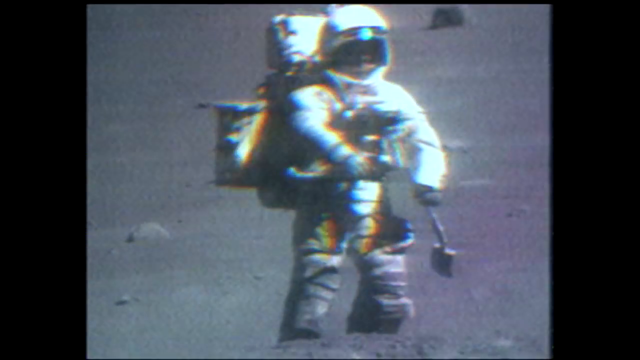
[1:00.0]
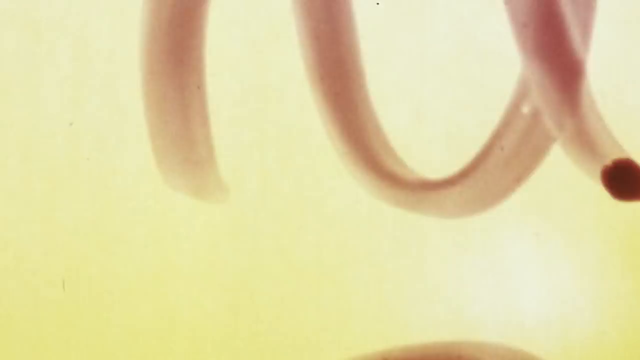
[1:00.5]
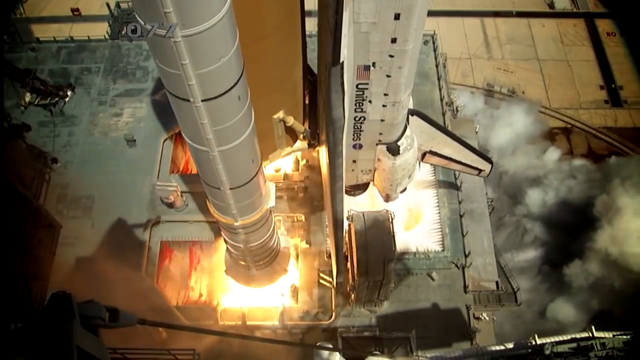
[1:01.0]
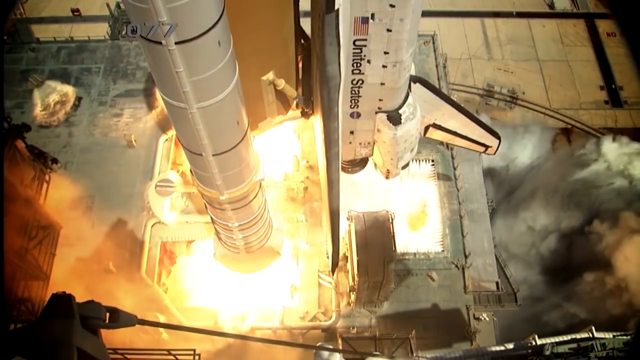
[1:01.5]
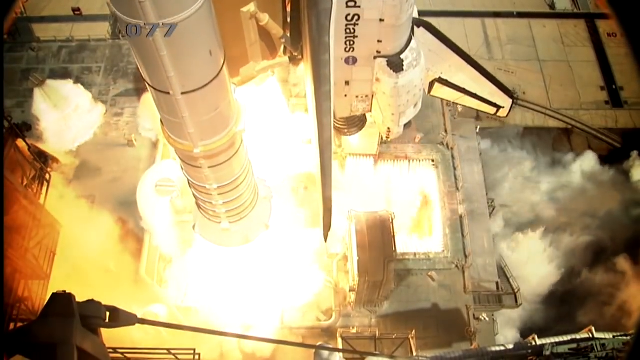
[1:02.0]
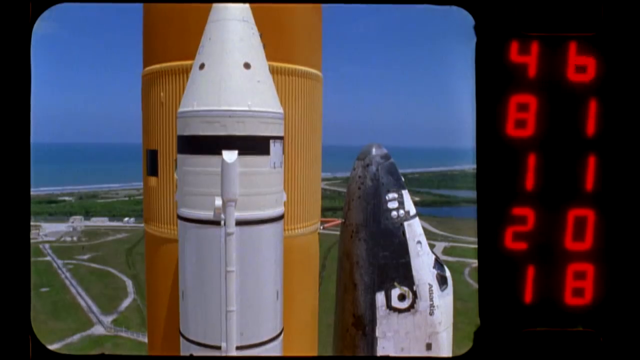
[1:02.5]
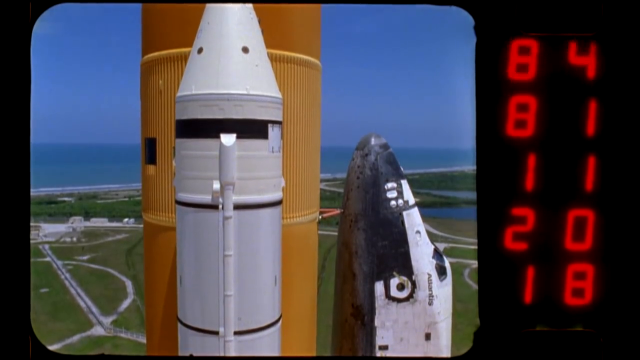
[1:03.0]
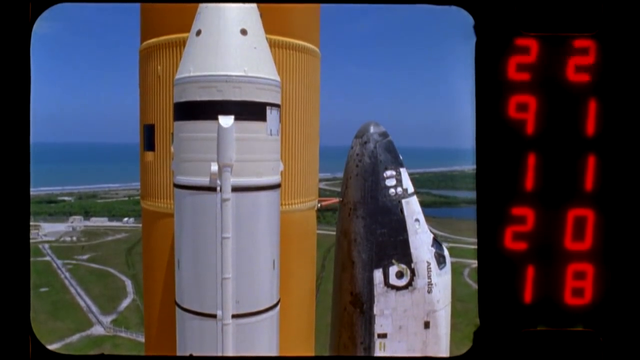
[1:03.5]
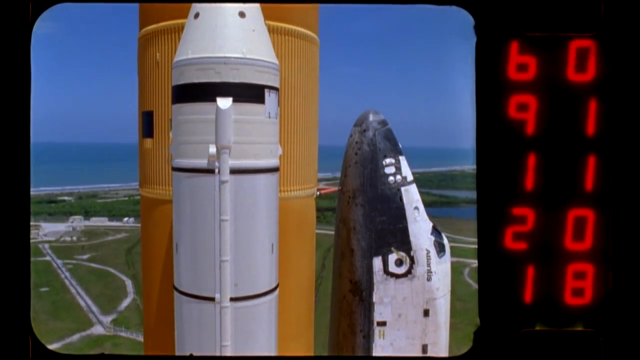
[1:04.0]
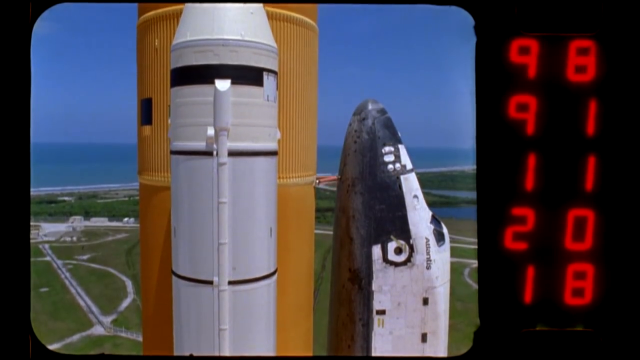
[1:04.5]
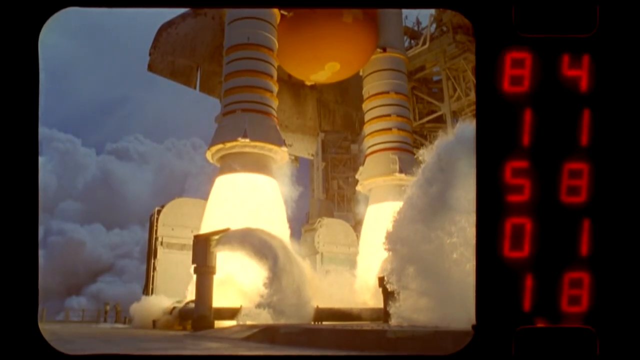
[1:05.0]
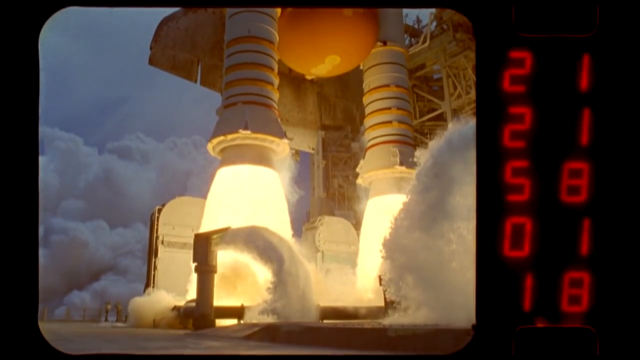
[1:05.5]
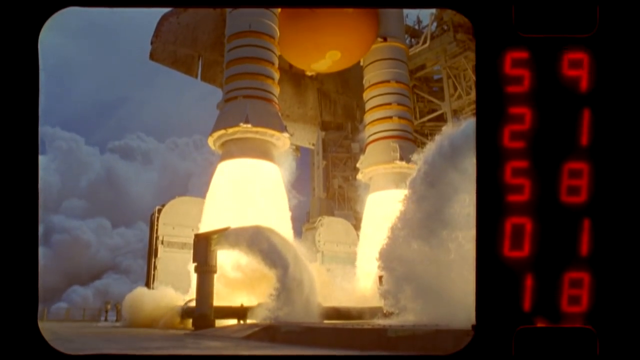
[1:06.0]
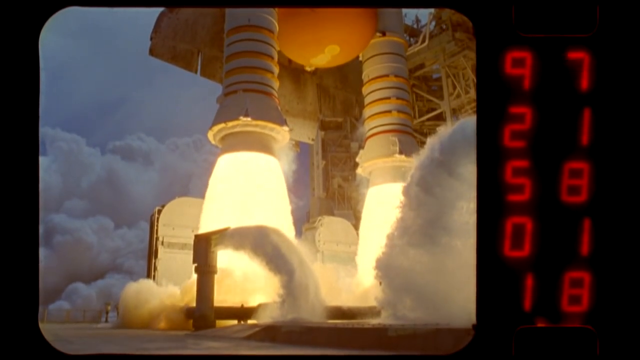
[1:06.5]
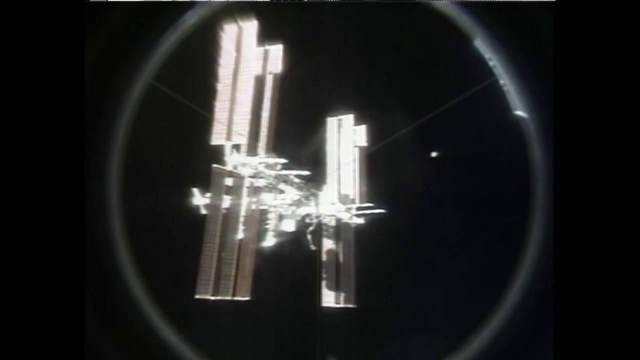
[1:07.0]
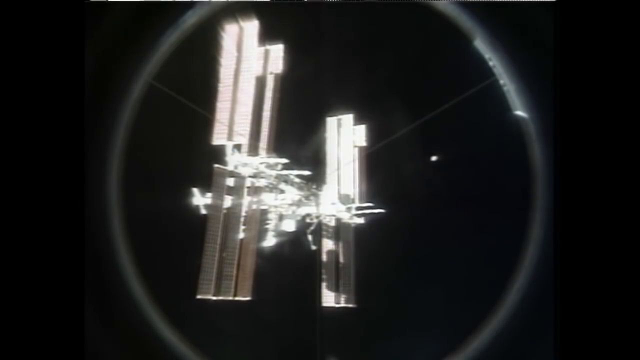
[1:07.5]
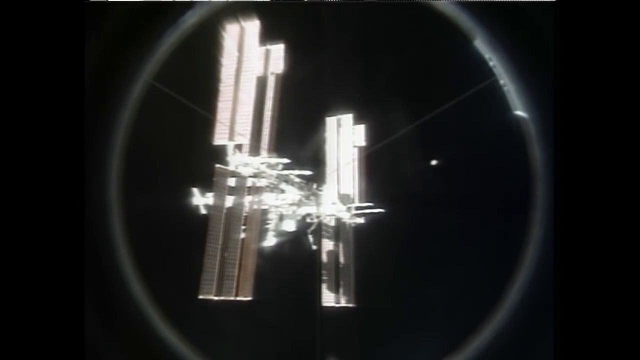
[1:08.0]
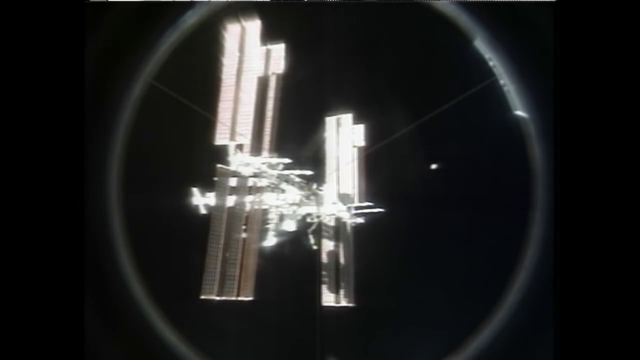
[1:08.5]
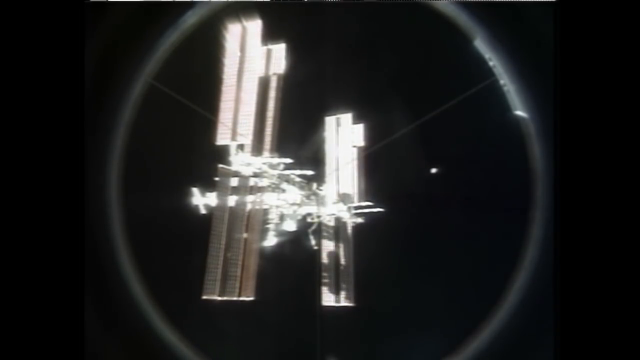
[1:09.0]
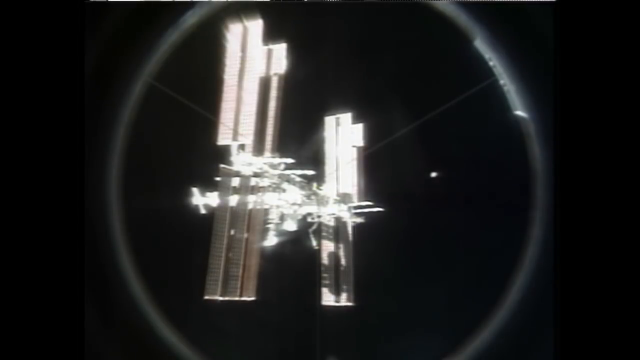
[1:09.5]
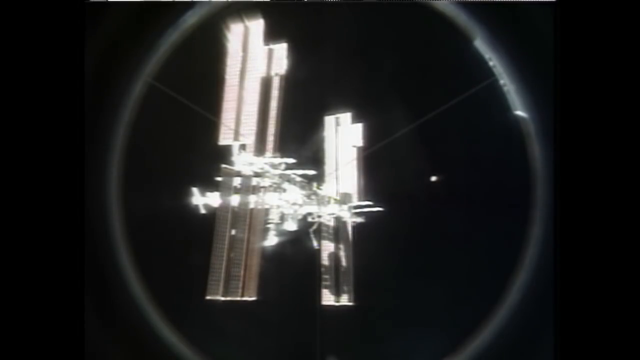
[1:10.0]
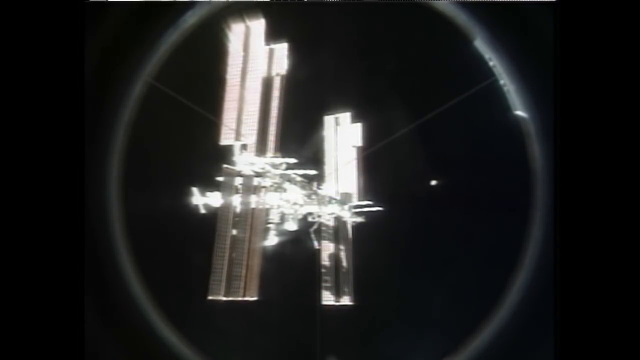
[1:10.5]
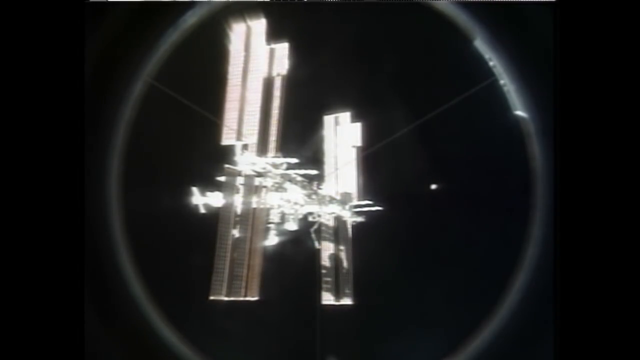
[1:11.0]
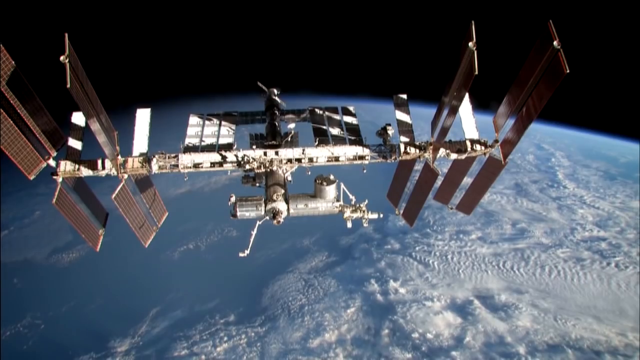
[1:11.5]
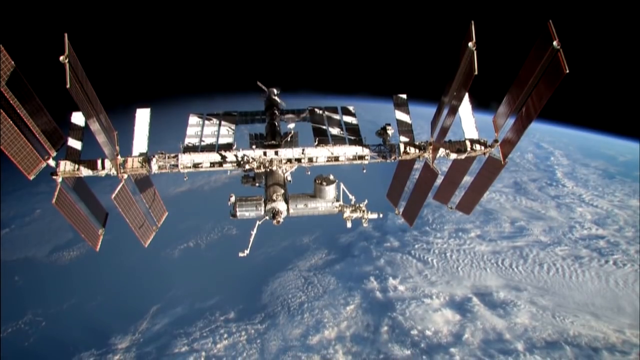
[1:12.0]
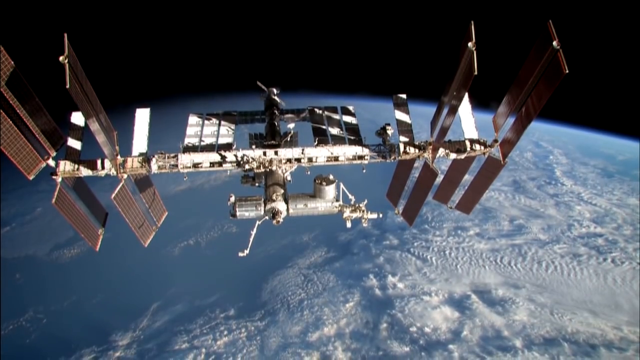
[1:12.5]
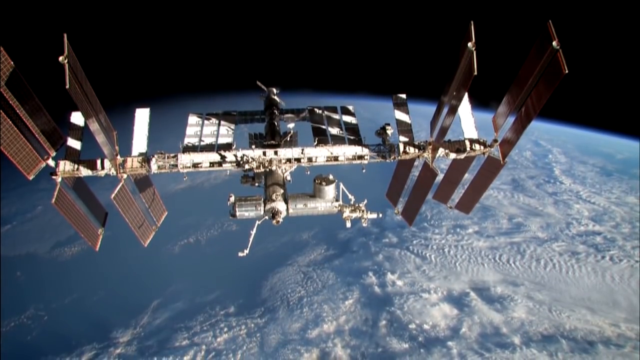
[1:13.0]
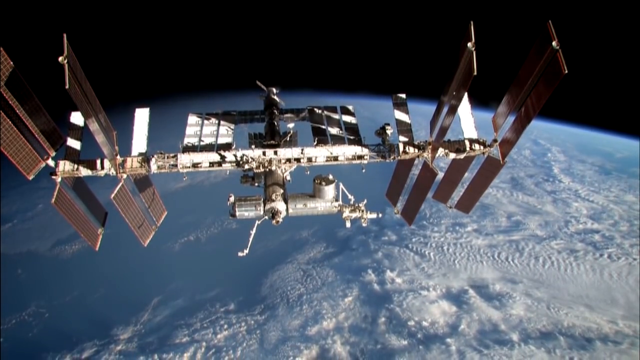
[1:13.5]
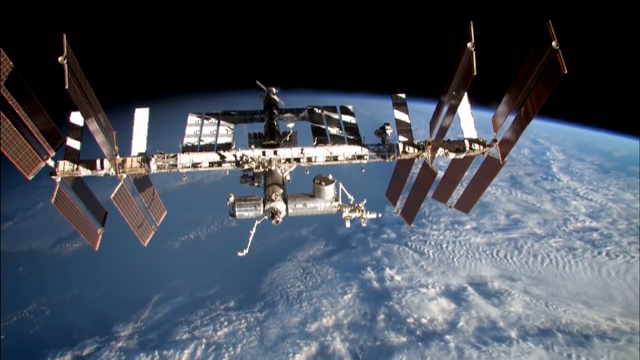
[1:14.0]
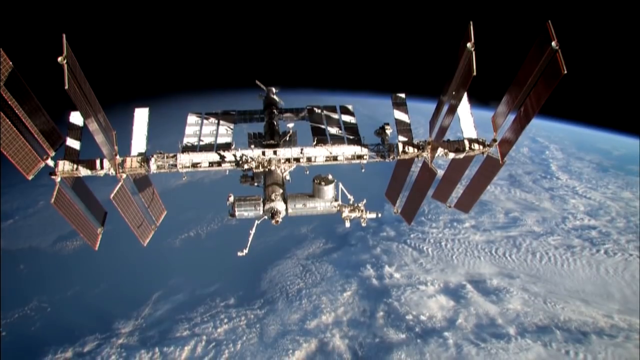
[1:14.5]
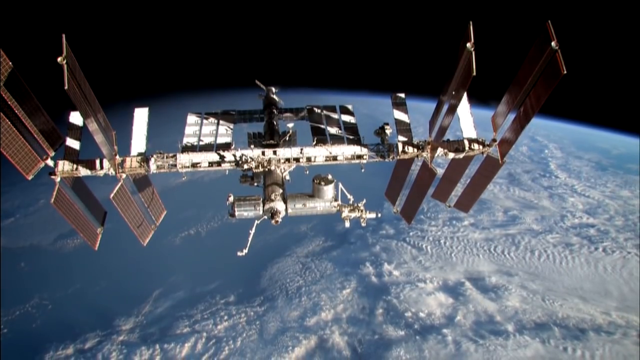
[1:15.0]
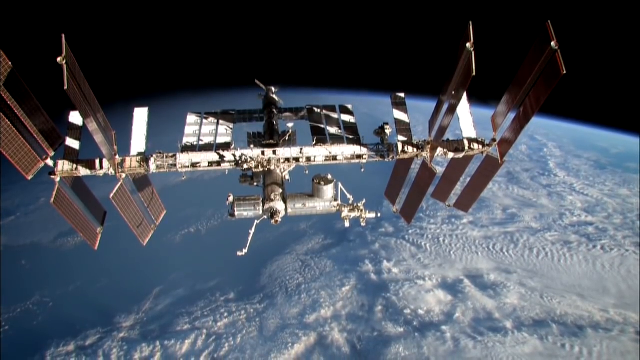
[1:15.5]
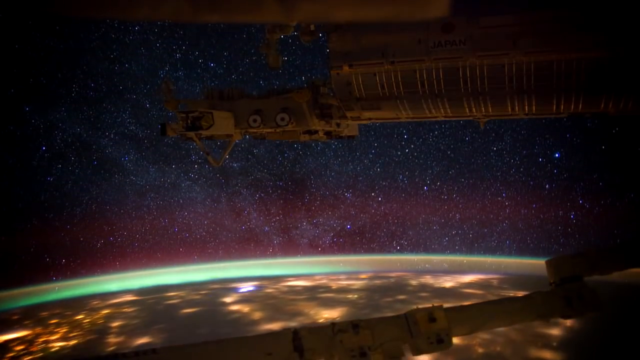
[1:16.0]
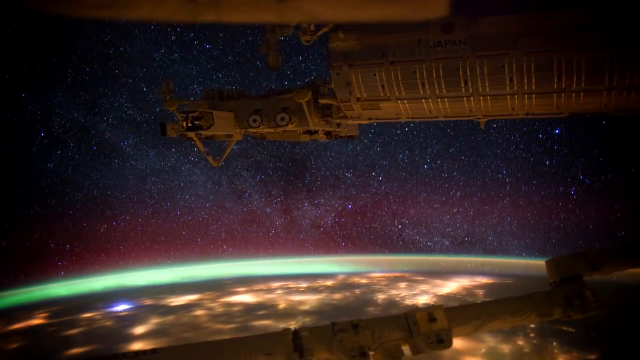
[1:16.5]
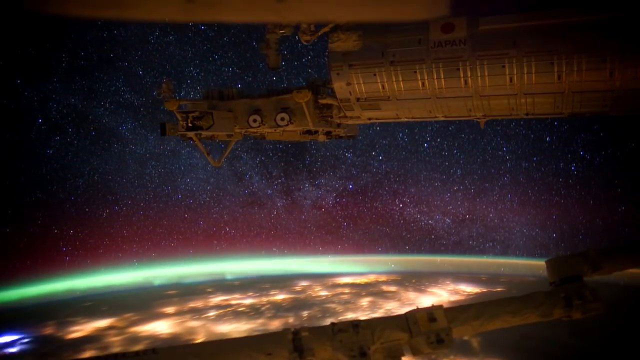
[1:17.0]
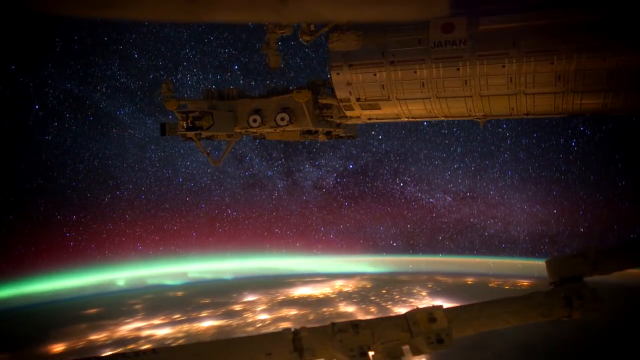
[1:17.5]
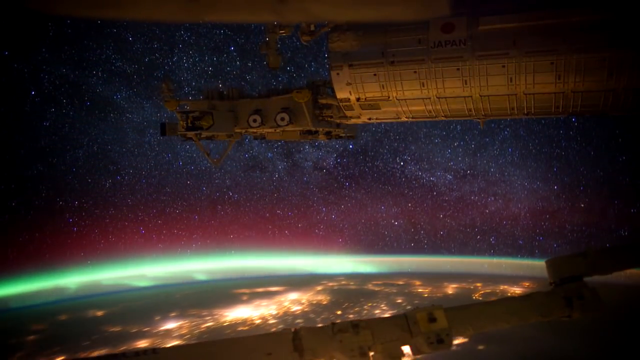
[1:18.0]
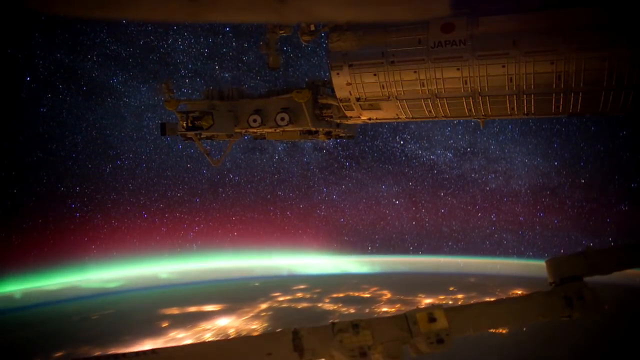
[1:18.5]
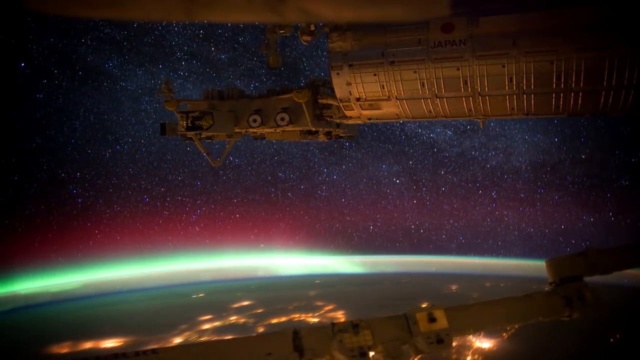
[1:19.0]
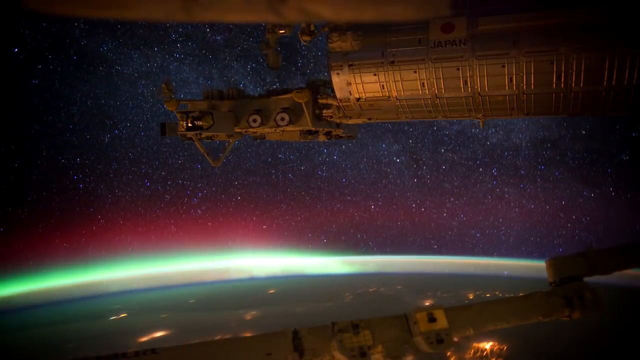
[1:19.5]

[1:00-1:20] An astronaut is on a brown, grayish, bumpy surface, apparently the moon. The background then turns beige with a squiggly line. On the side of a rocket, "United States" is written in black, with the American flag in front of it. The rocket goes up; it is mostly white with a black outline. Another takeoff is shown from a different angle, with numbers on the right side such as 40, 91, 11, 20, 18. Blast offs from different rockets follow. A light shaped like an H moves across above the Earth's surface, and there seems to be a greenish film on the outer part of the Earth.